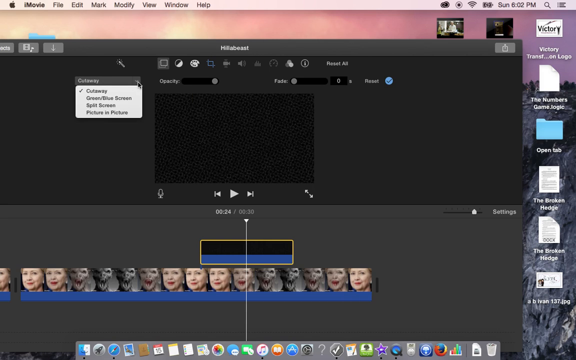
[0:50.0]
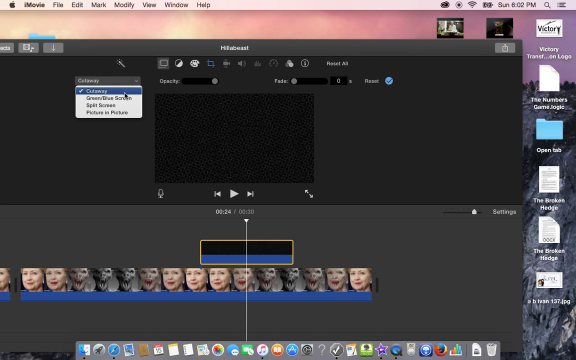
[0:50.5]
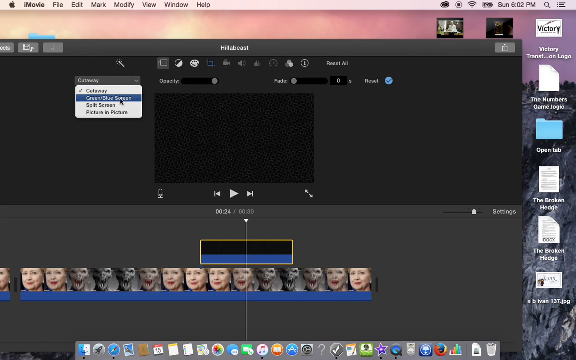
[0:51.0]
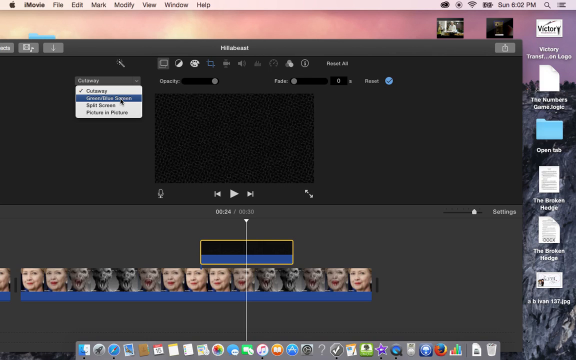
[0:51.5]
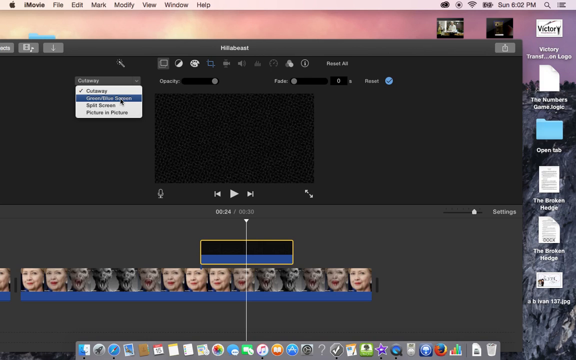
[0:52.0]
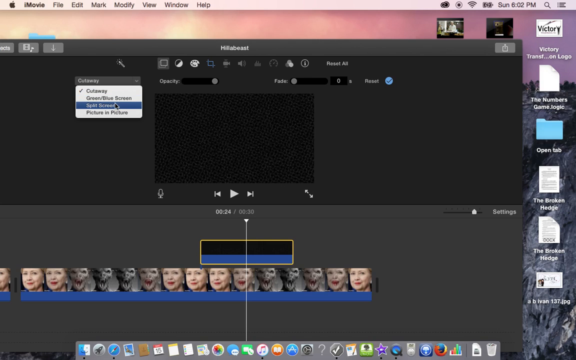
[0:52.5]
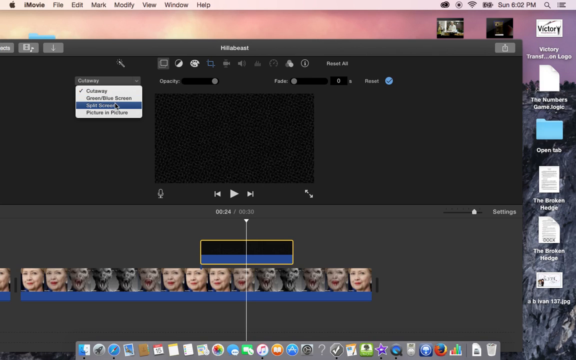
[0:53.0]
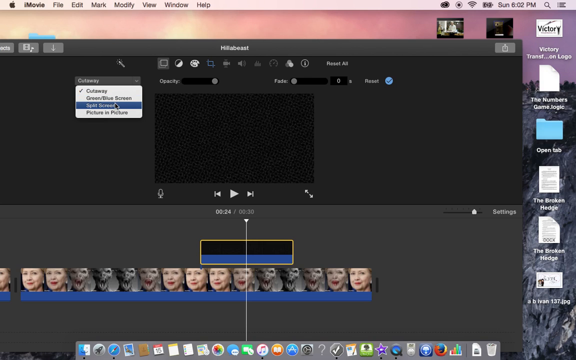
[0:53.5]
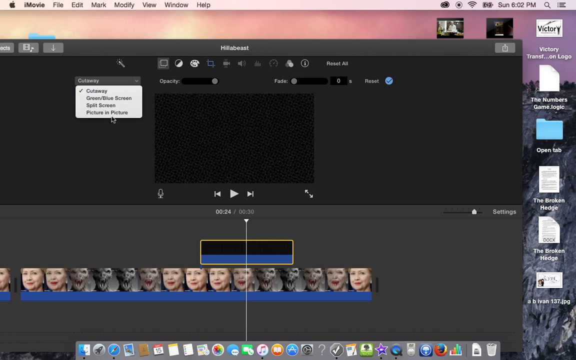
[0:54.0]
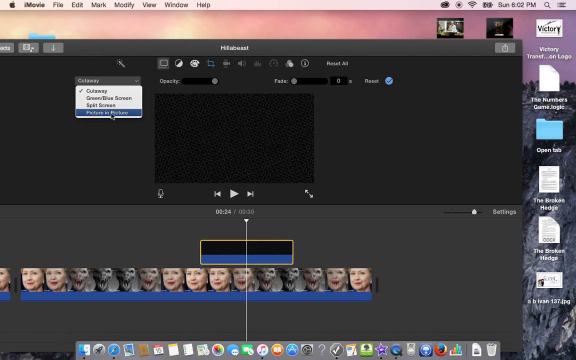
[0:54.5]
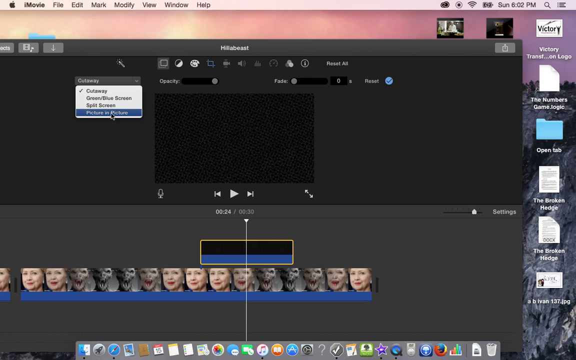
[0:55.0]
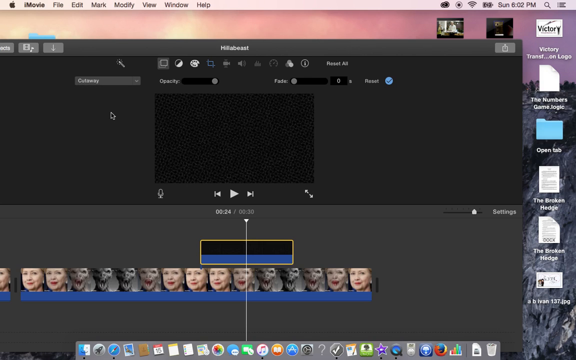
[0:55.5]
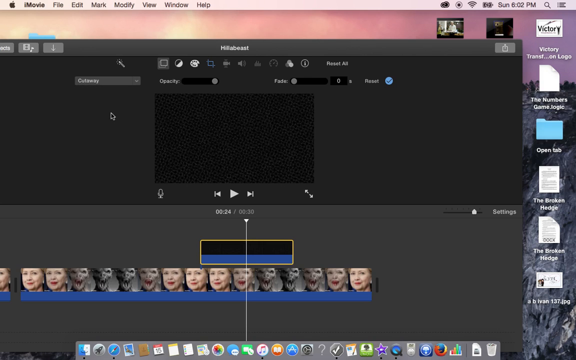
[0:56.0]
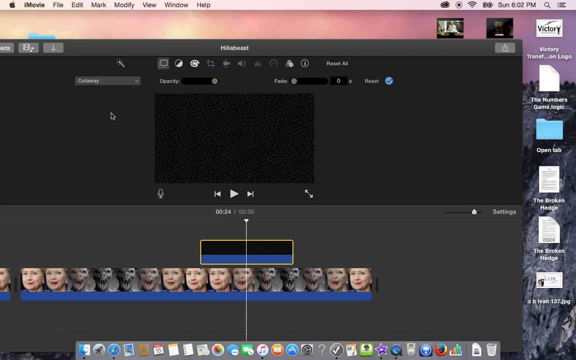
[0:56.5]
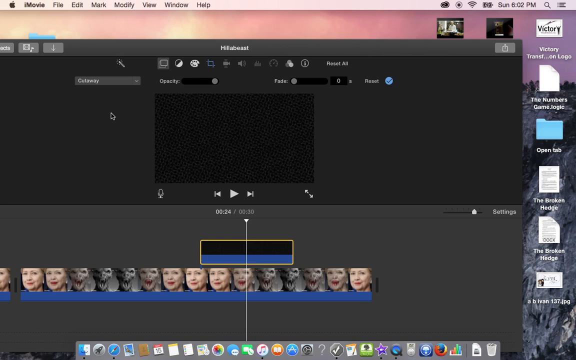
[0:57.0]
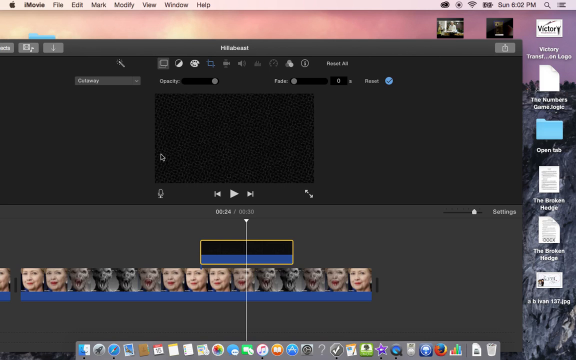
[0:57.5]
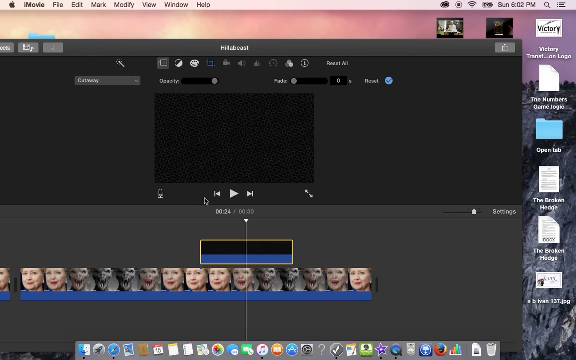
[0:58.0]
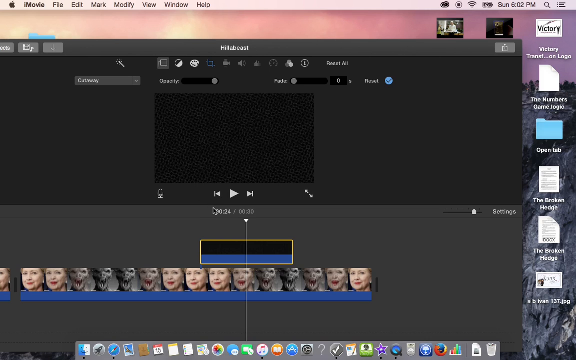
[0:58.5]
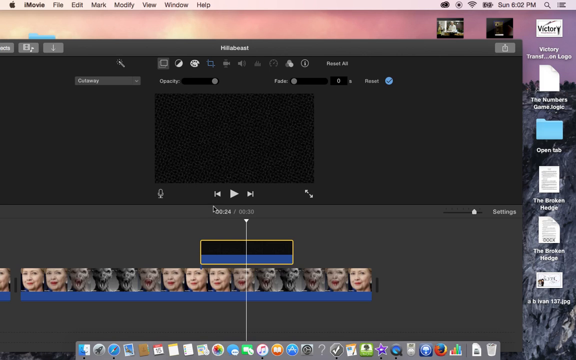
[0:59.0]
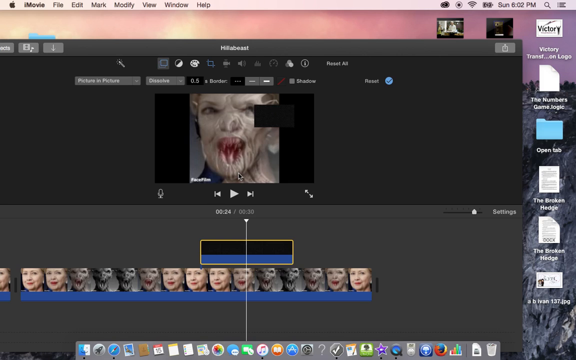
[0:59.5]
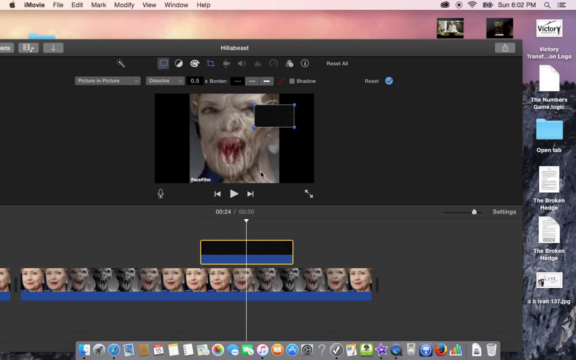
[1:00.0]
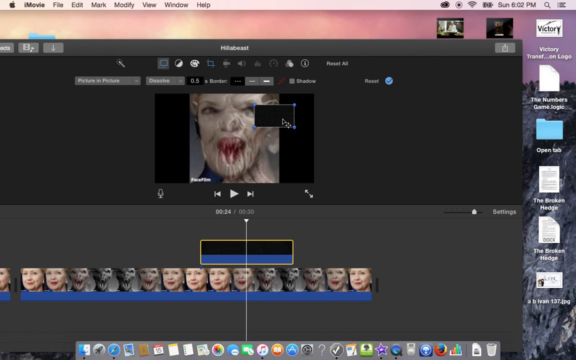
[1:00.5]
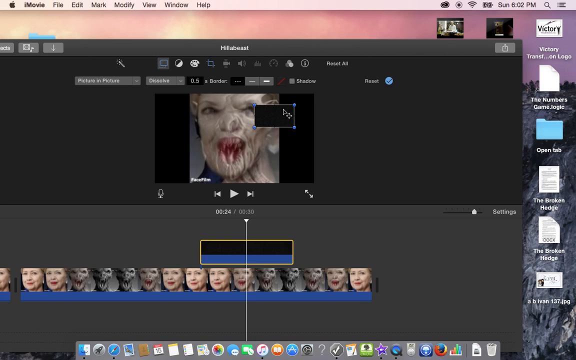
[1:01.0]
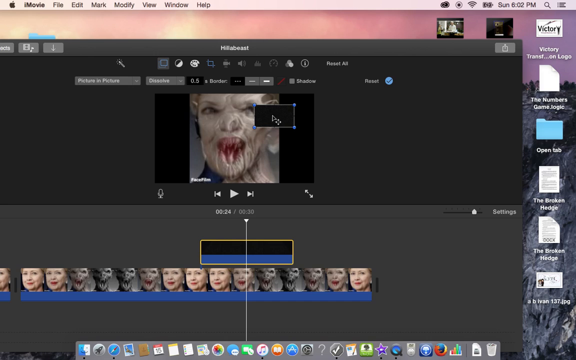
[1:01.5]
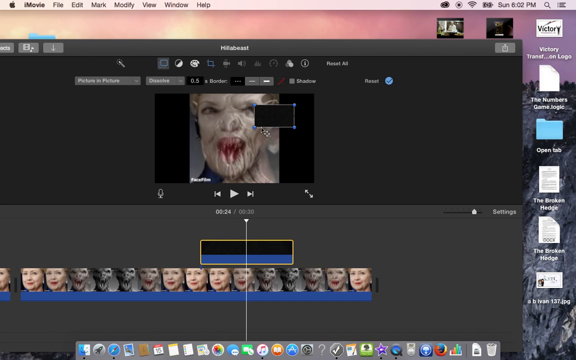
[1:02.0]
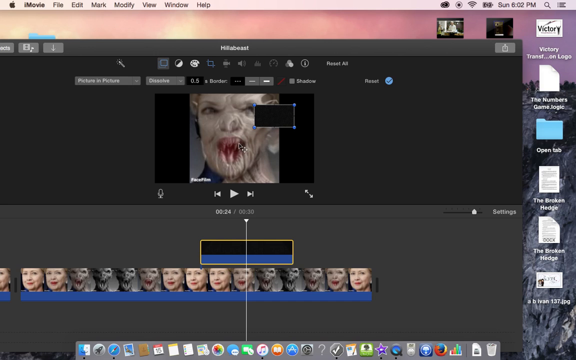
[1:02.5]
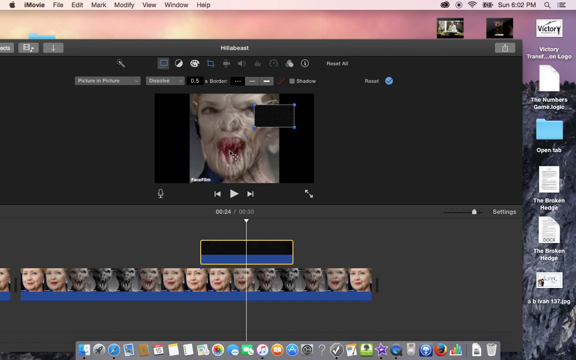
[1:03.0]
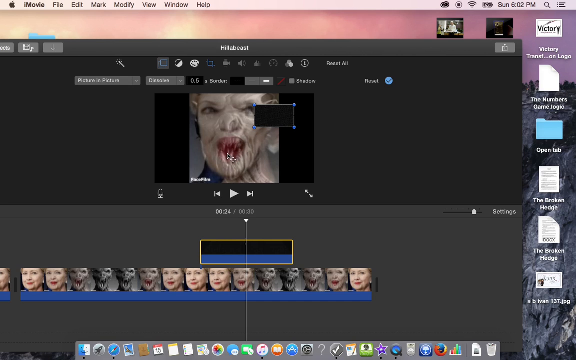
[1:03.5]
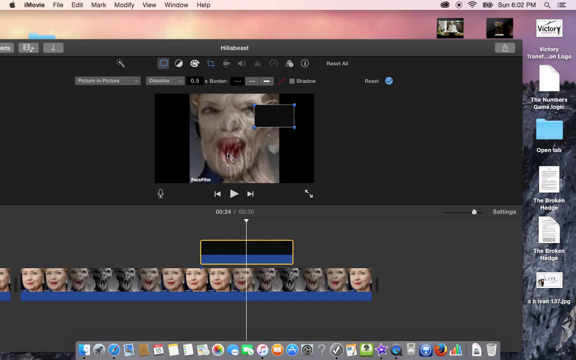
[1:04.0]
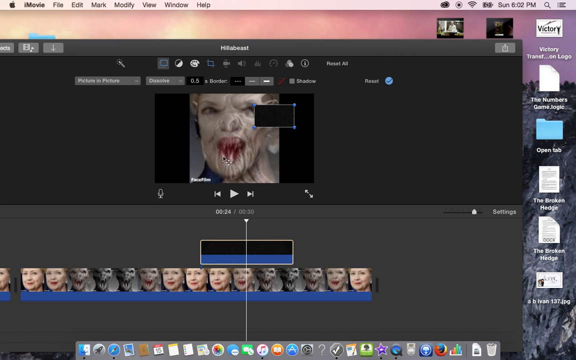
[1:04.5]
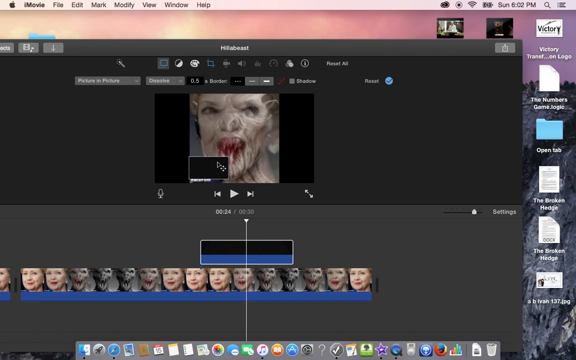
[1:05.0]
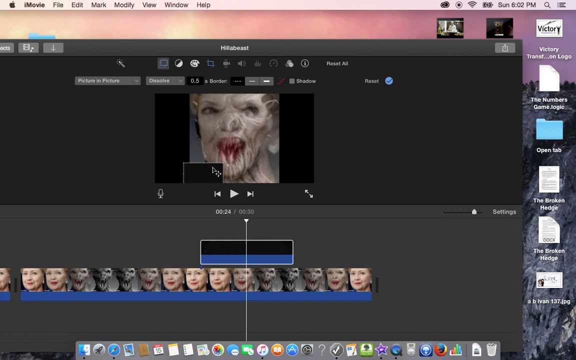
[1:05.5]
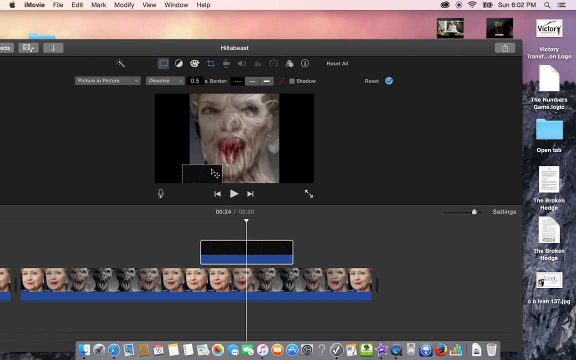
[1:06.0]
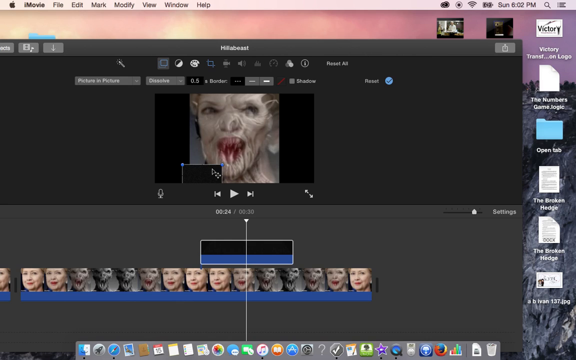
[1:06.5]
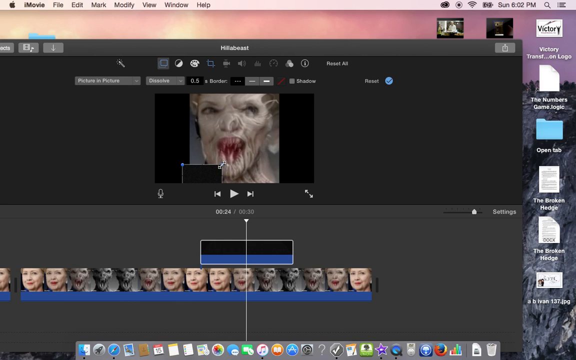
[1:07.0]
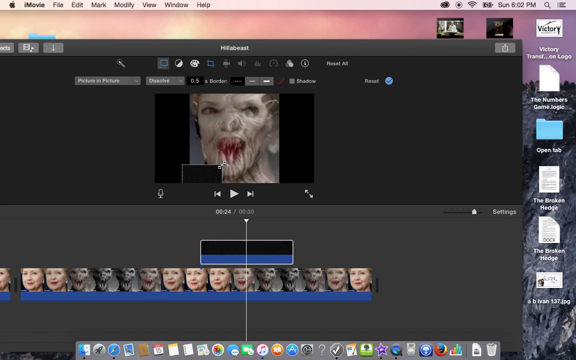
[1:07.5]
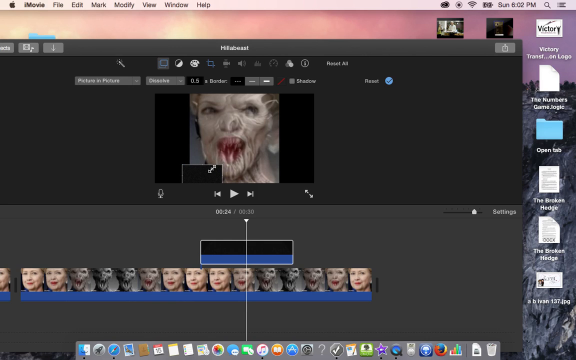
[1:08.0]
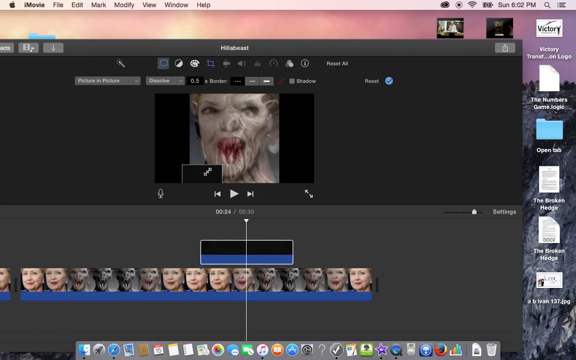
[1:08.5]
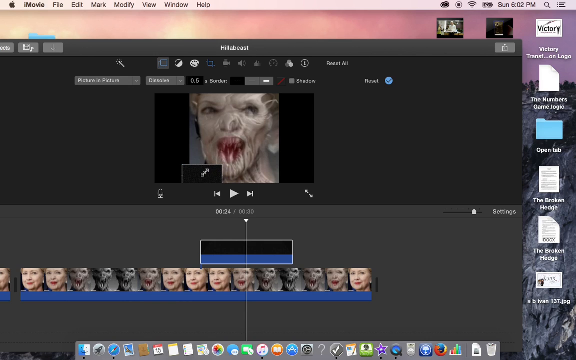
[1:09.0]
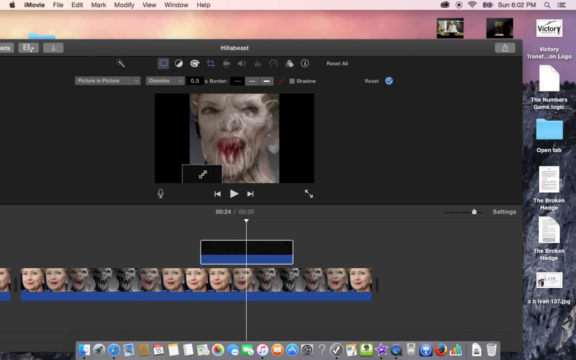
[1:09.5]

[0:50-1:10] The person edits the black-and-white picture of the scary monster, then moves on to a picture of Hillary Clinton and blends it with the monster picture. In the top left corner are the Apple logo and "iMovie", followed by File, Edit, Mark, Modify, View, Windows and Help options. The device is connected to Wi-Fi, the screen is being recorded, and the day and time read Sunday, 6:02 p.m. The desktop has an "OpenTAB" item, a broken item and a picture of Hillary Clinton.